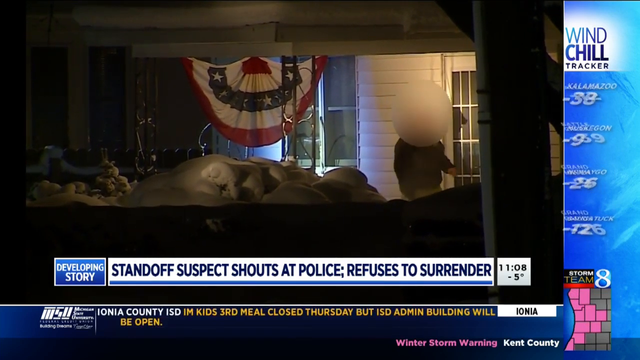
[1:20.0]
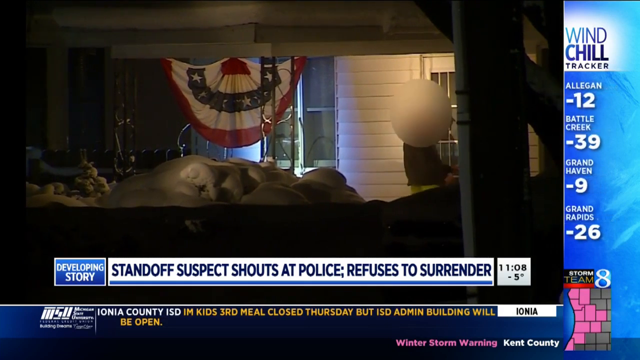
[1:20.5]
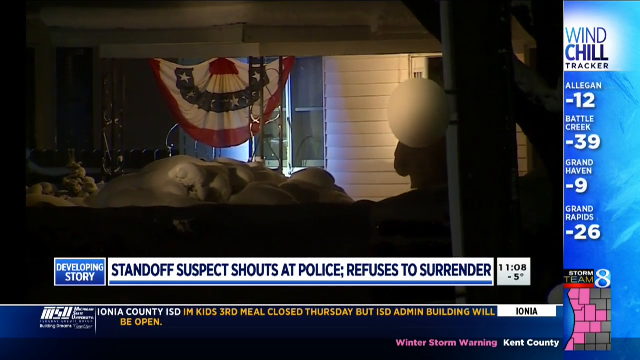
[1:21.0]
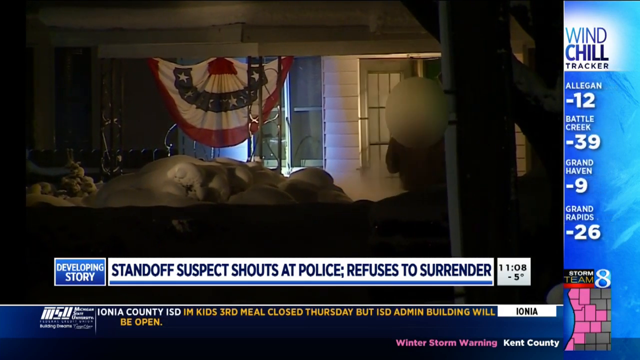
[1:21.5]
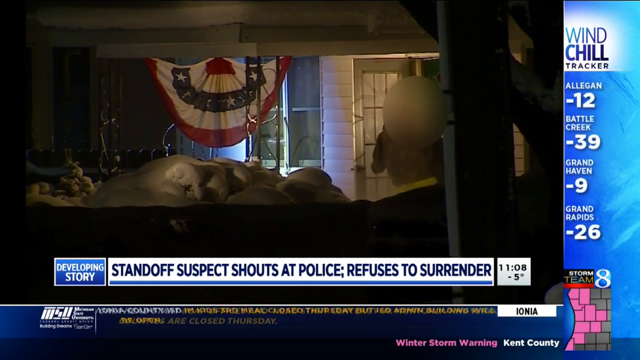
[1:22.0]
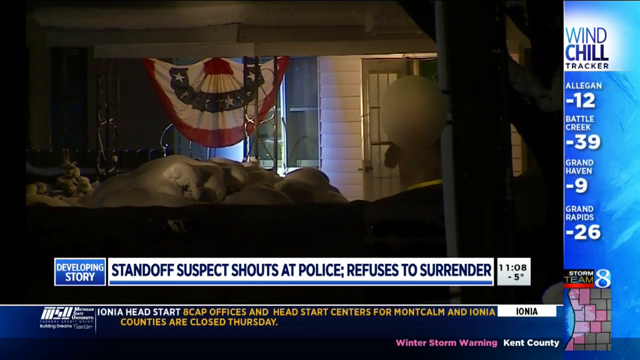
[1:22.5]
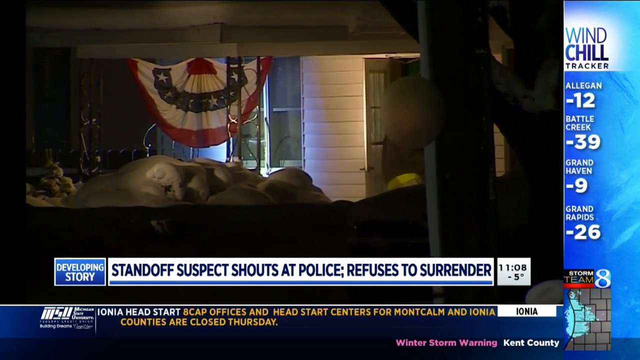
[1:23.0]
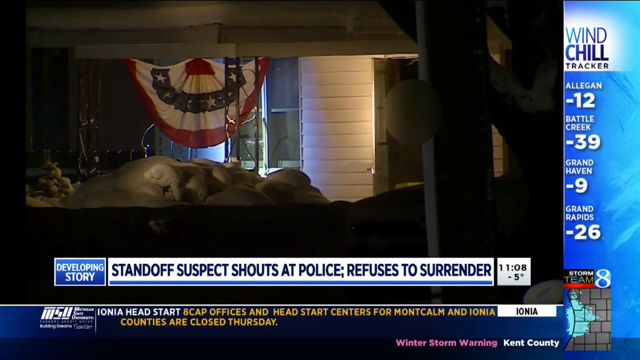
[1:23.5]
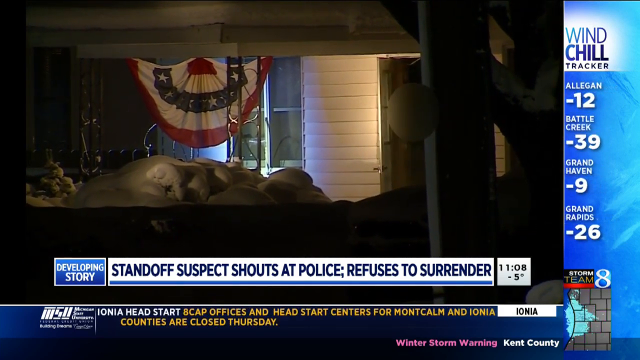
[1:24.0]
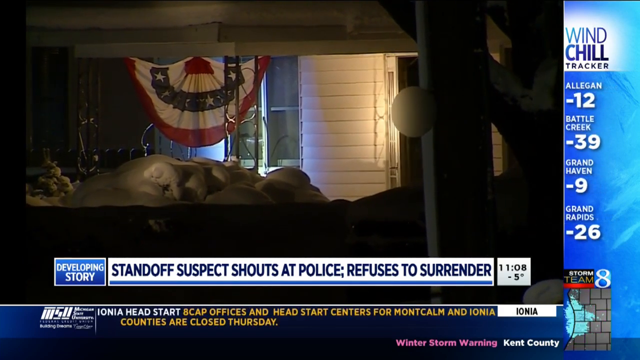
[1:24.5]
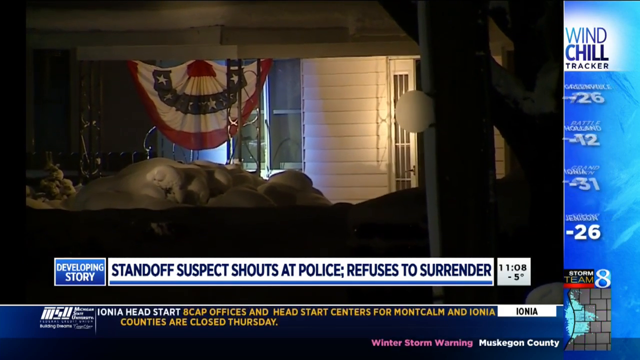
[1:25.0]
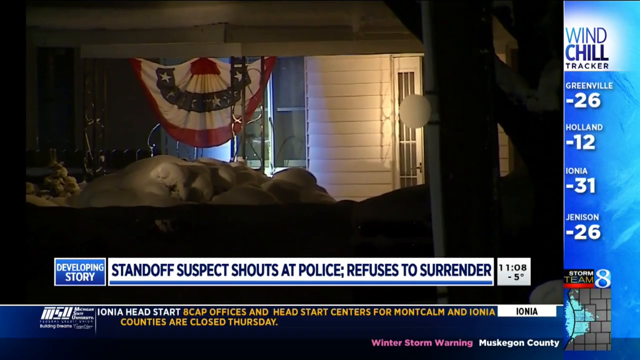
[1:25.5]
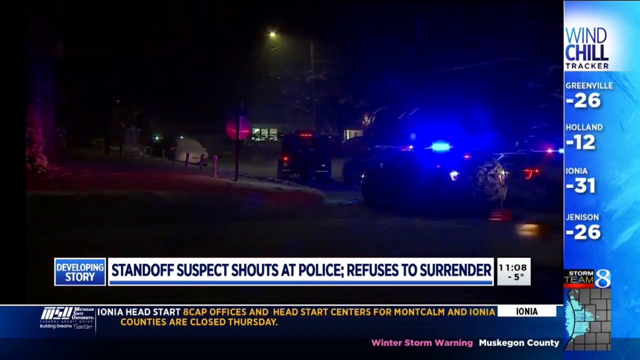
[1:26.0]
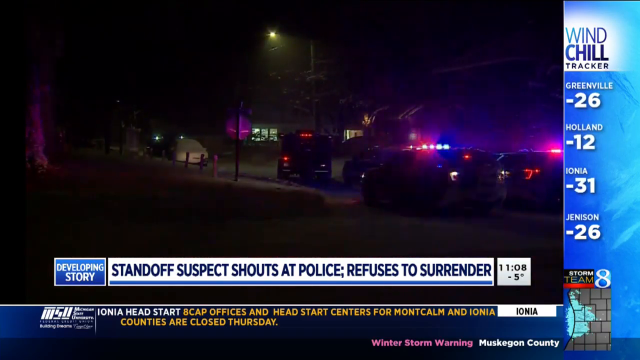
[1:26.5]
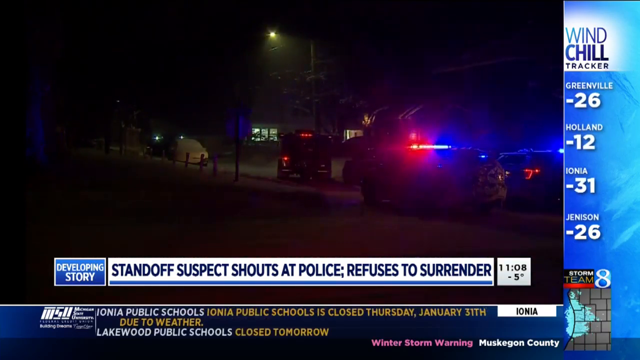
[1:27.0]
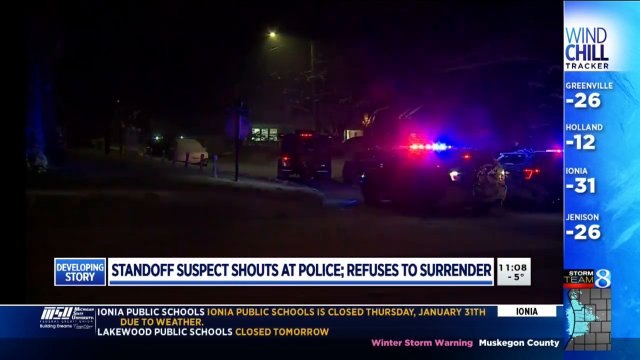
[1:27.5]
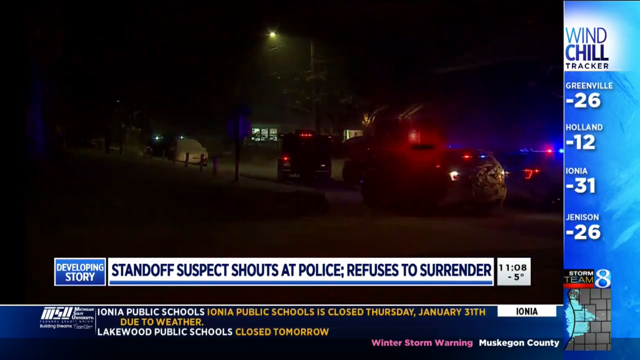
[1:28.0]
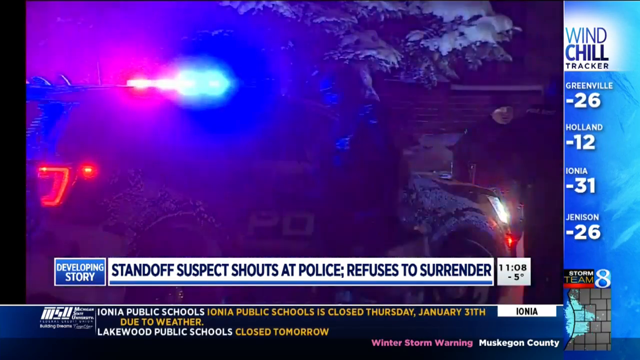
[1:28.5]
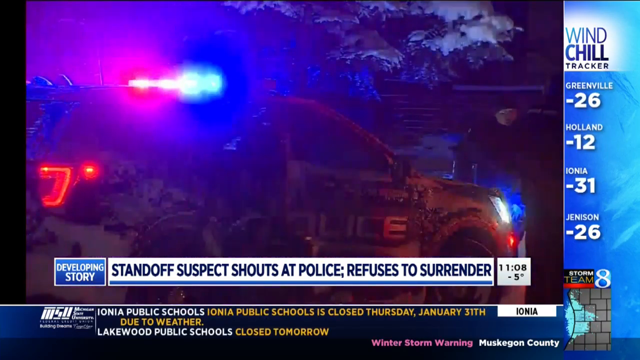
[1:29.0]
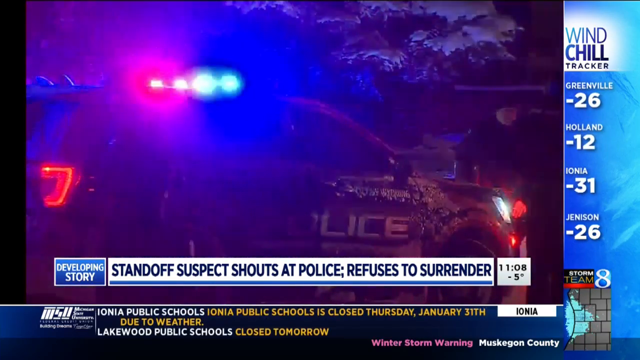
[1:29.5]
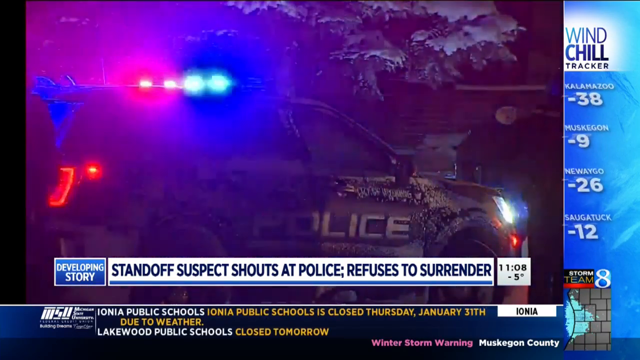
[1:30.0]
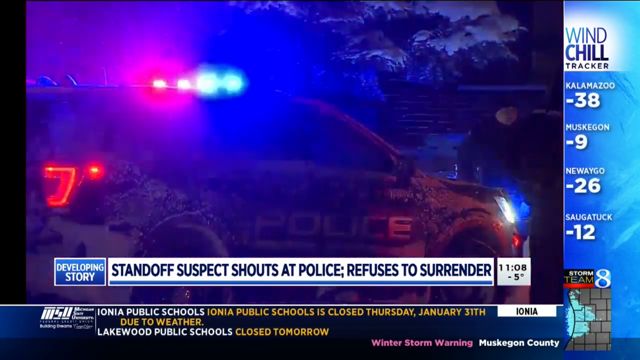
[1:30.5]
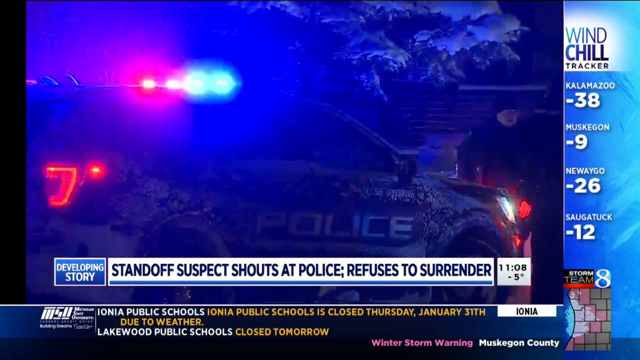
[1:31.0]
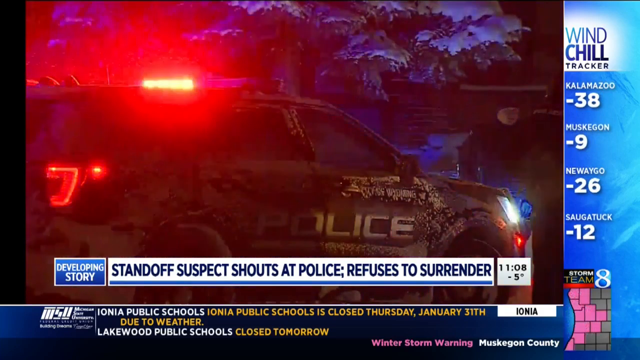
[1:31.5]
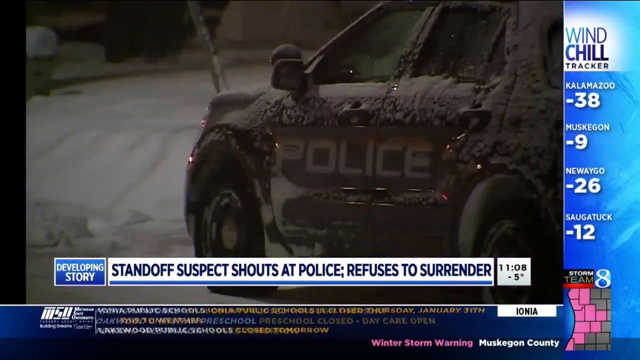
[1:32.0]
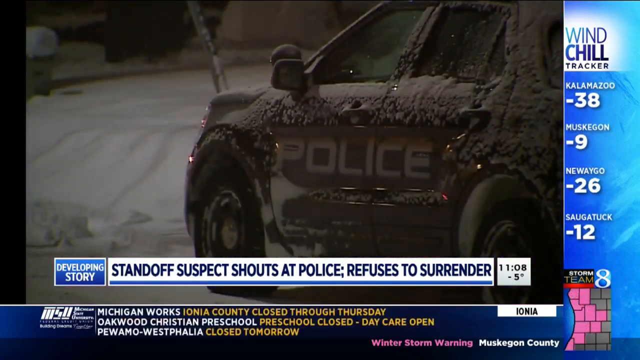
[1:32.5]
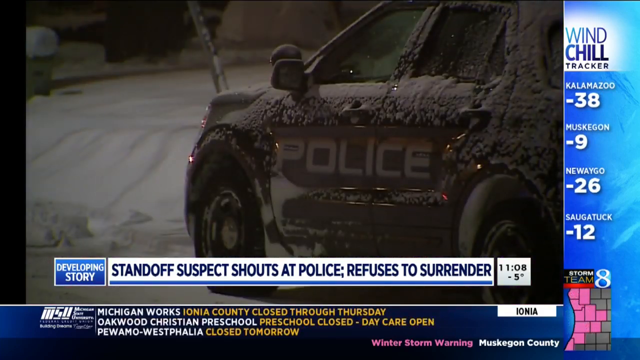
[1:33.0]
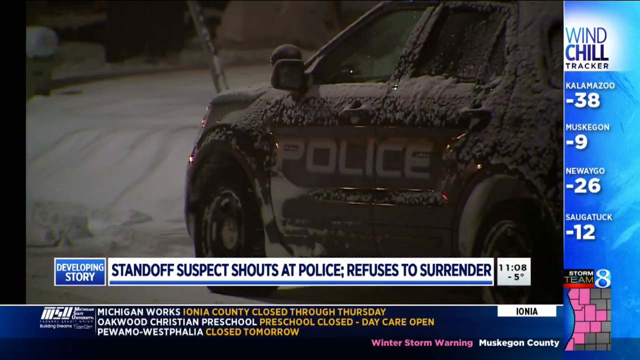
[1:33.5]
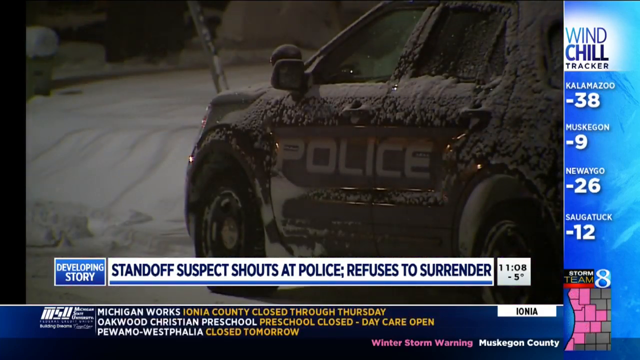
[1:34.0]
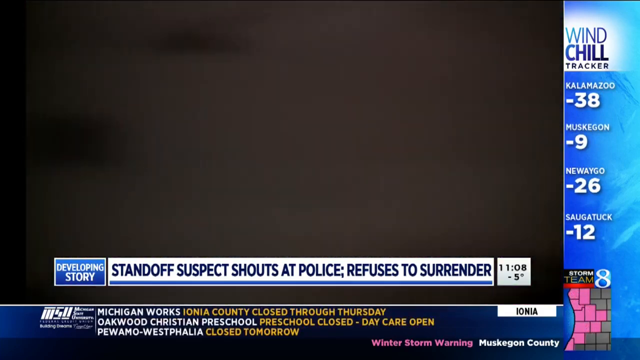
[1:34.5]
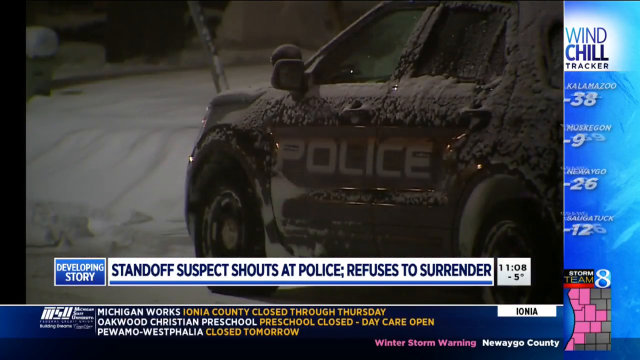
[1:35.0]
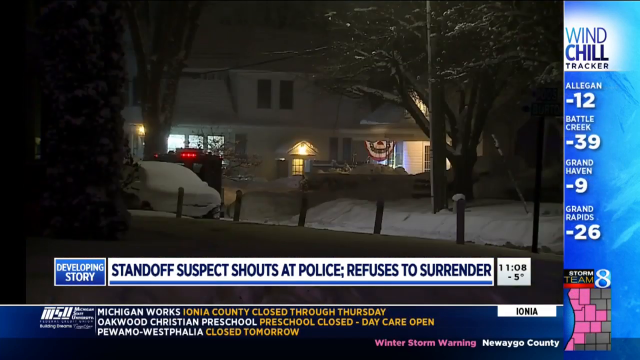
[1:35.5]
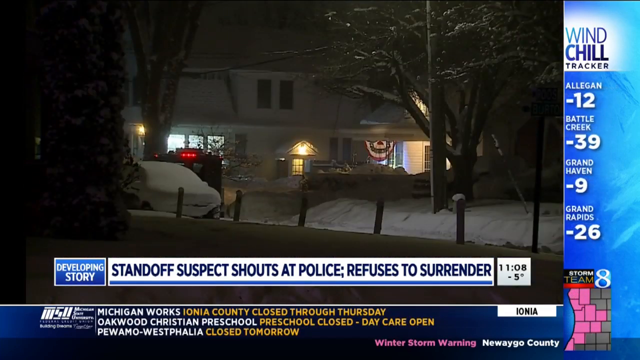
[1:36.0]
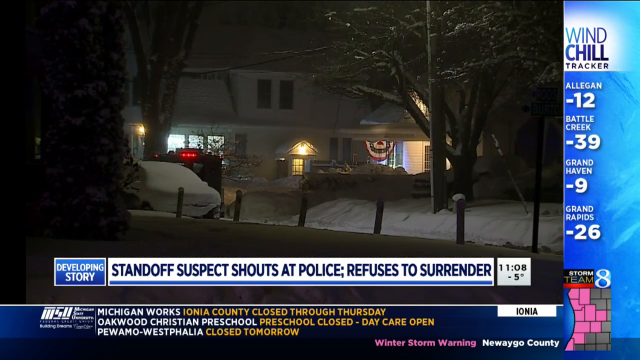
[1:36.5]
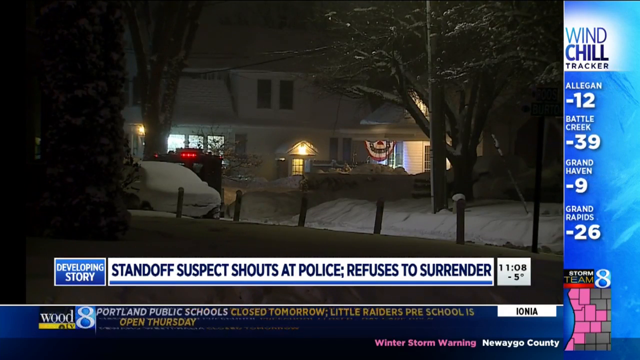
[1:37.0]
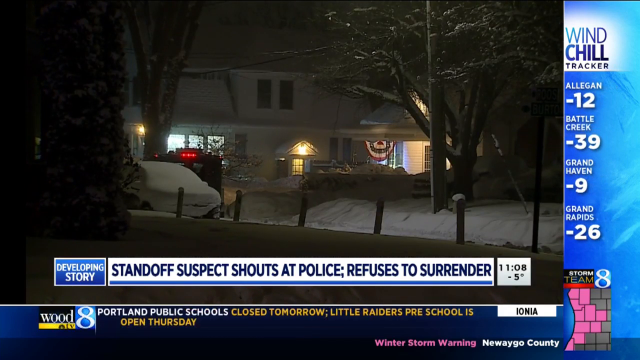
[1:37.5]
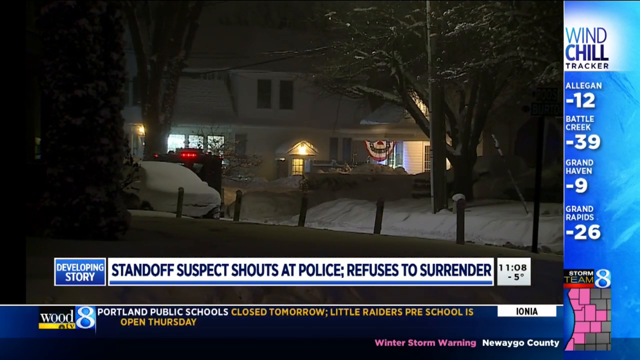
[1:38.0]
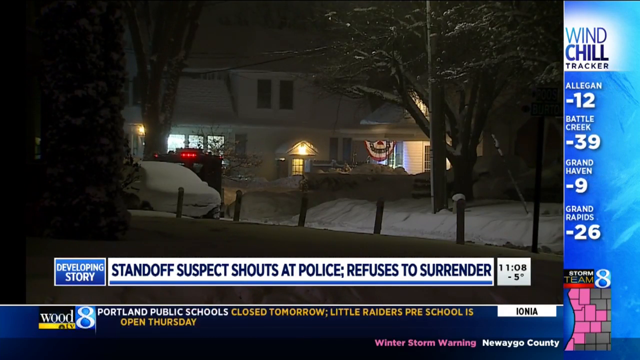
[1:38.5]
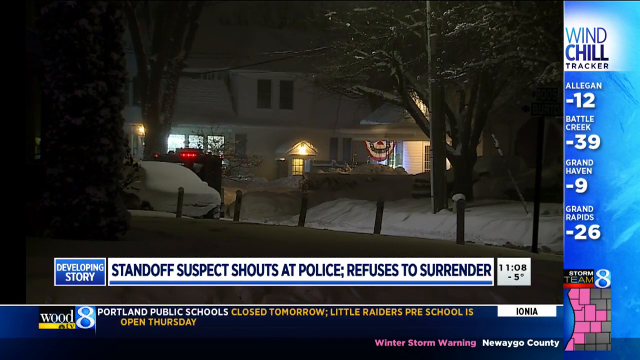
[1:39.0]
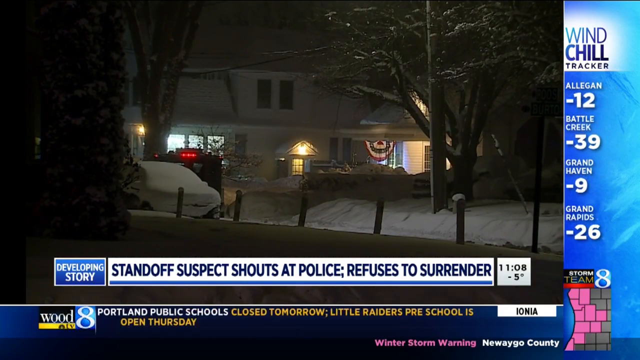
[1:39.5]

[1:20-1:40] The suspect opens the door and goes inside his home, making it clear he was outside. Next, a number of police cars appear, apparently in front of his house, with red and blue lights flashing. A police cruiser with its lights on is covered in snow, as are the other vehicles, and "police" is written on the side of its door. The video then shows the house itself clearly: the flag seen earlier is actually hanging outside. A police car seems to be parked not far from the house, off to the side rather than directly in front. There is a lot of snow on the ground and a couple of trees in the area. The screen shows 11:08 p.m., and it is dark outside at night. The man is not visible in this shot.